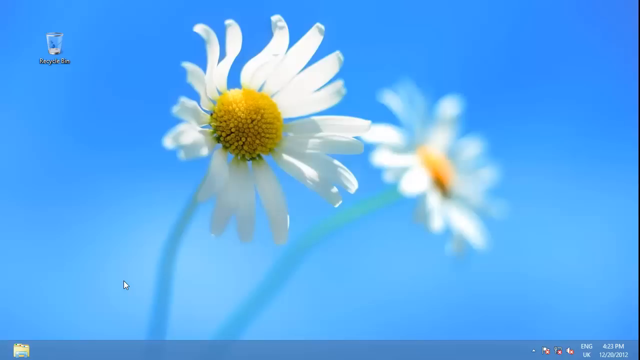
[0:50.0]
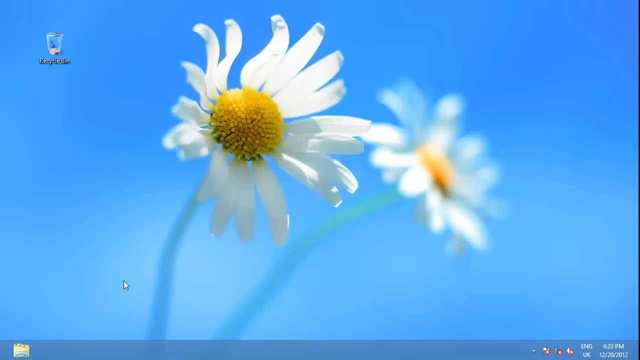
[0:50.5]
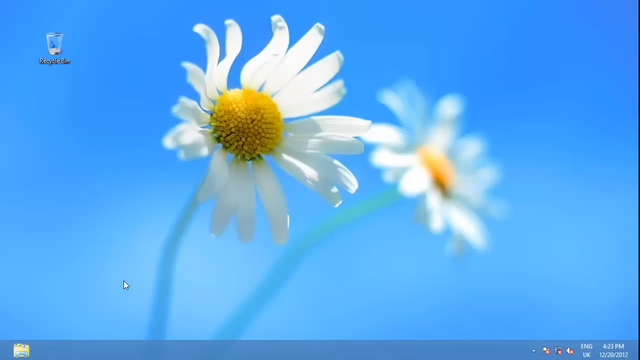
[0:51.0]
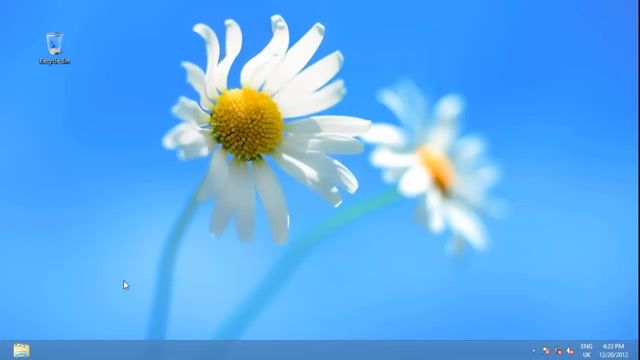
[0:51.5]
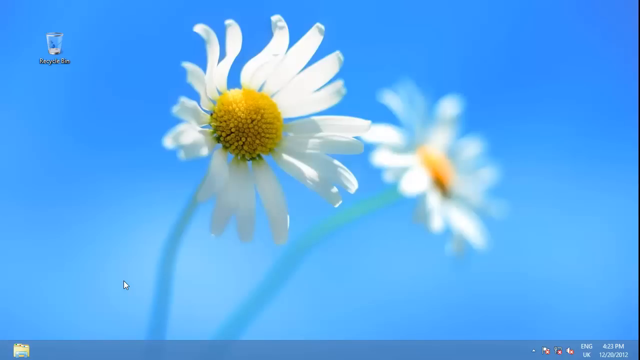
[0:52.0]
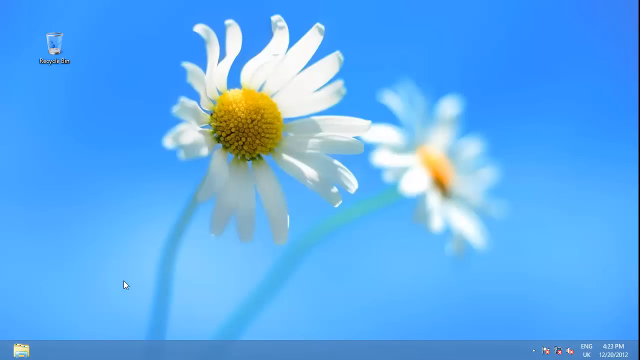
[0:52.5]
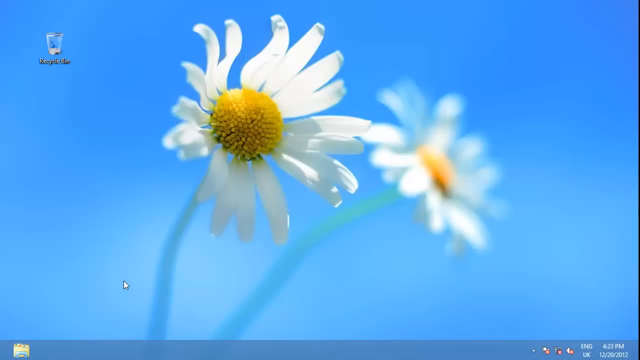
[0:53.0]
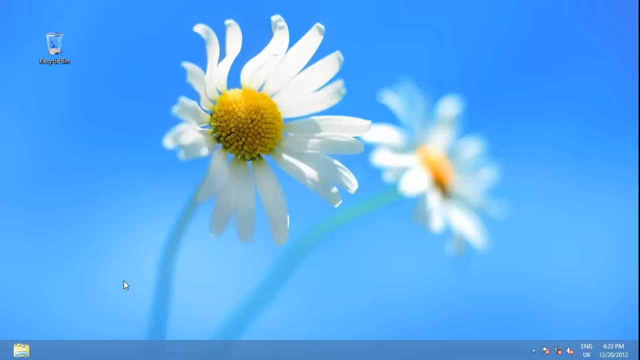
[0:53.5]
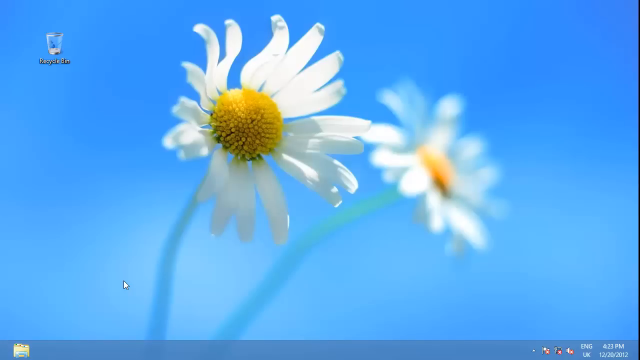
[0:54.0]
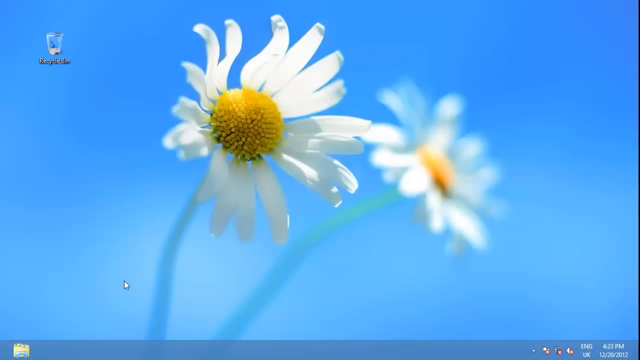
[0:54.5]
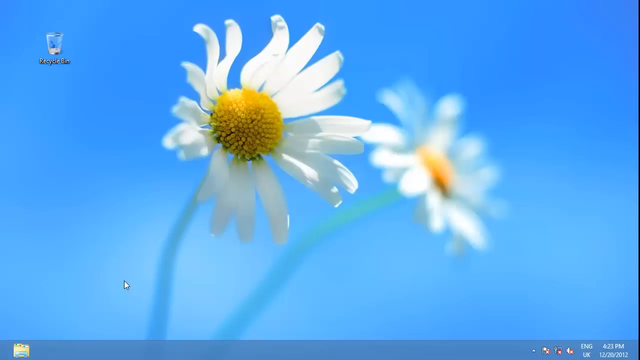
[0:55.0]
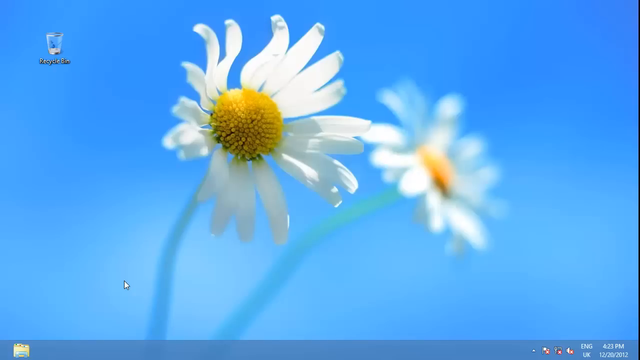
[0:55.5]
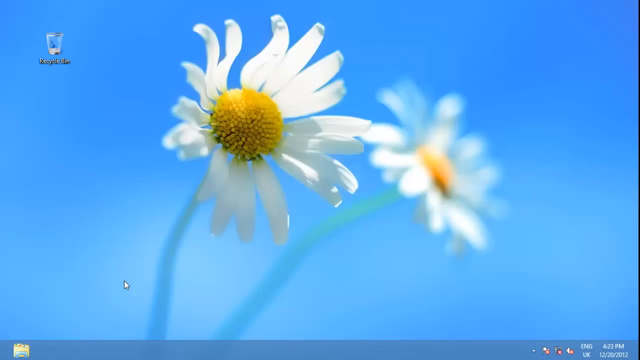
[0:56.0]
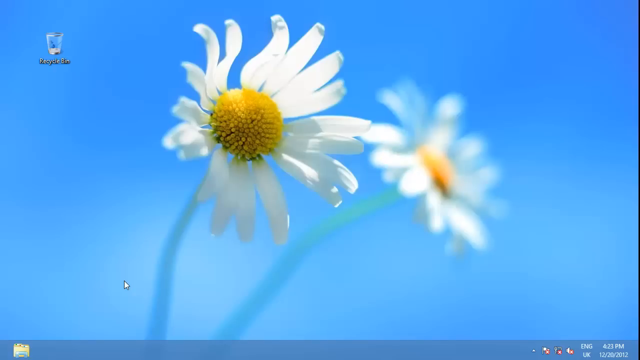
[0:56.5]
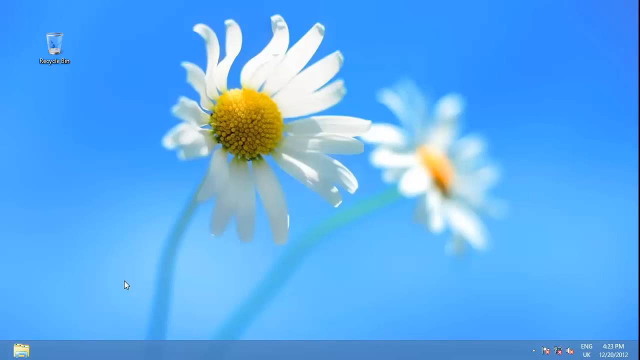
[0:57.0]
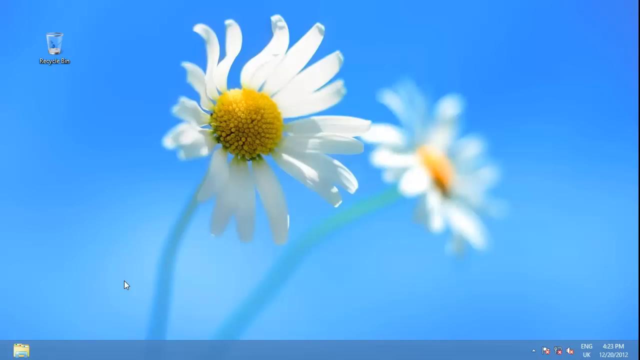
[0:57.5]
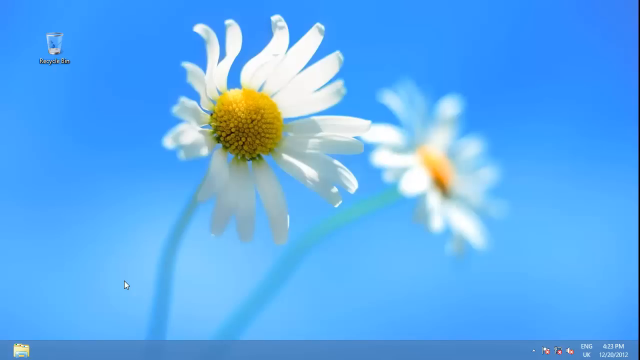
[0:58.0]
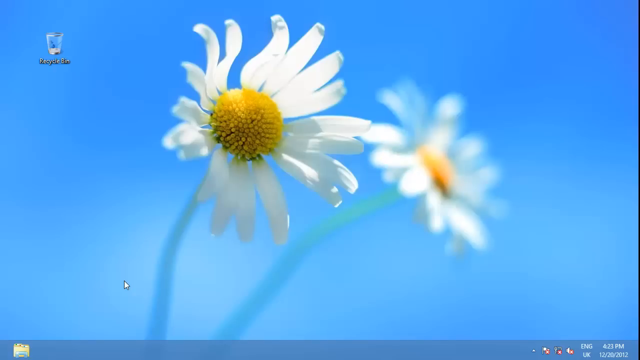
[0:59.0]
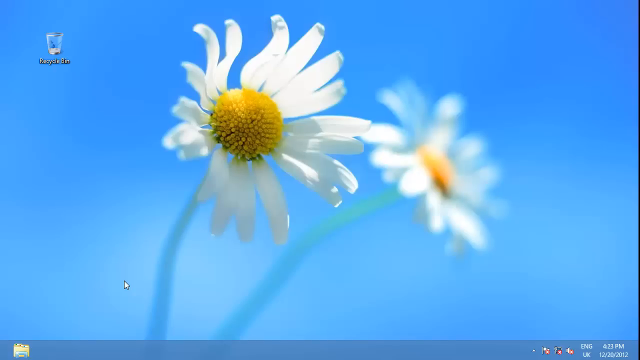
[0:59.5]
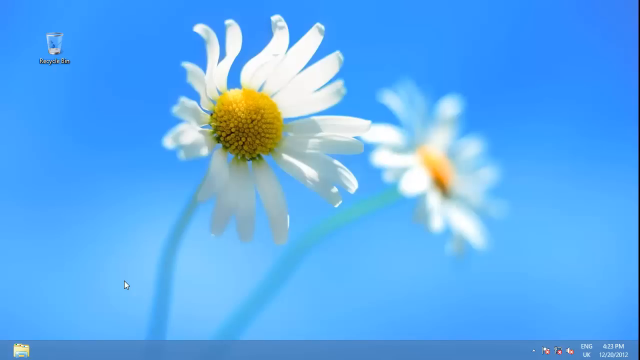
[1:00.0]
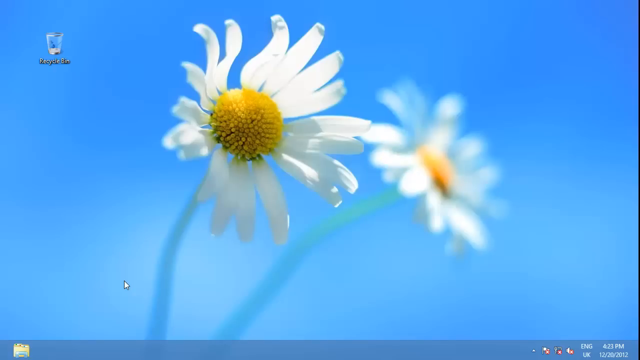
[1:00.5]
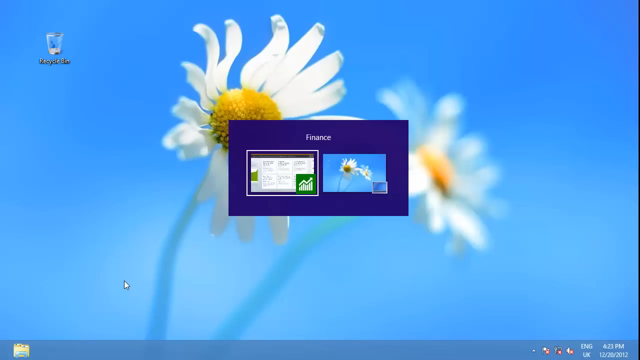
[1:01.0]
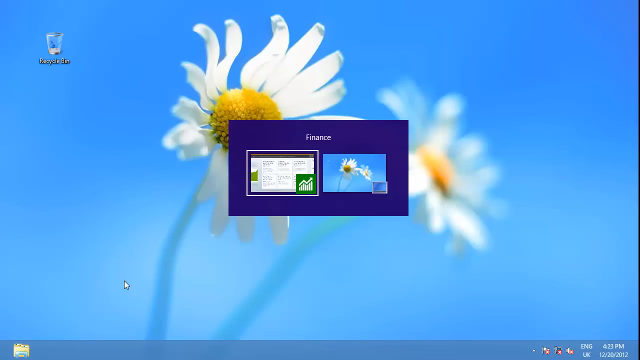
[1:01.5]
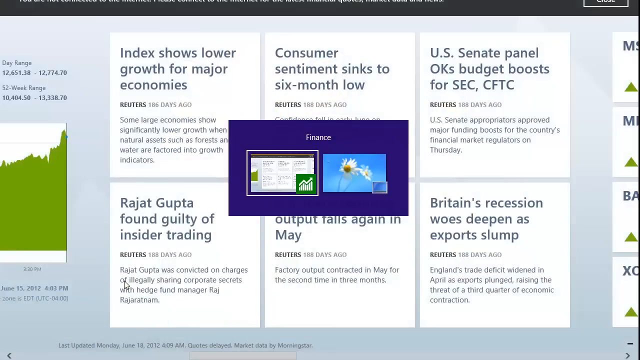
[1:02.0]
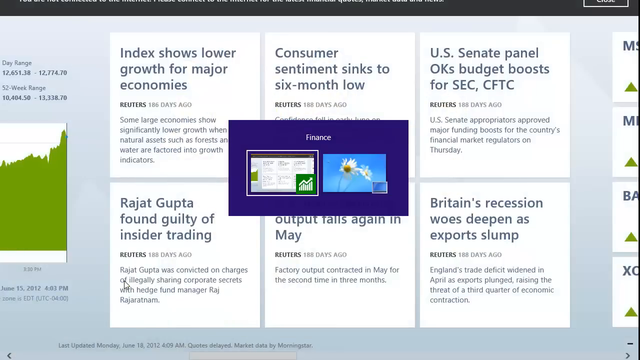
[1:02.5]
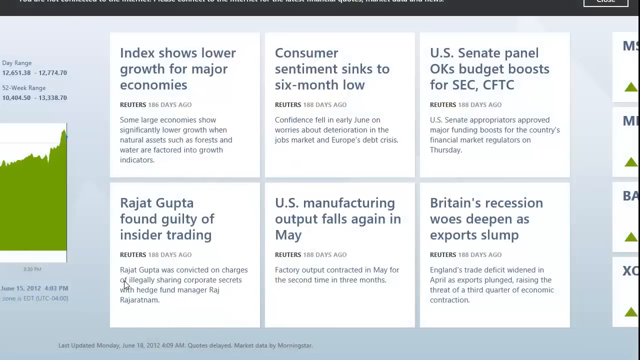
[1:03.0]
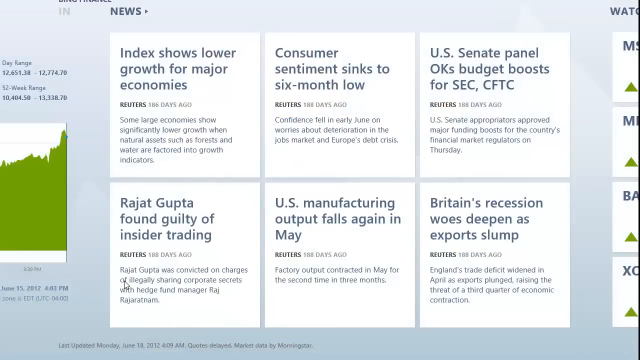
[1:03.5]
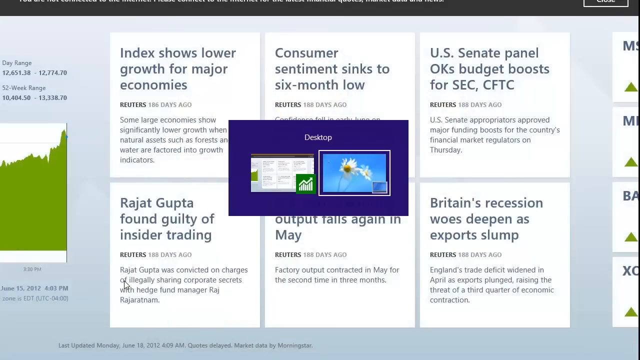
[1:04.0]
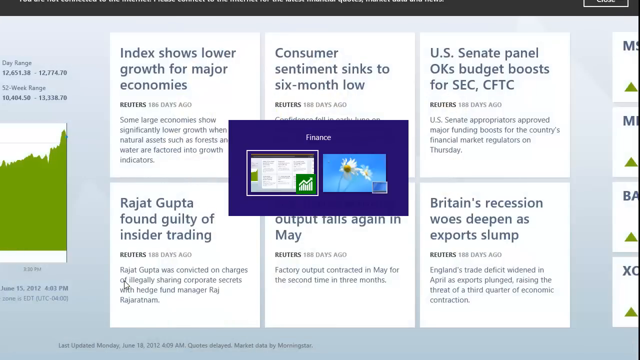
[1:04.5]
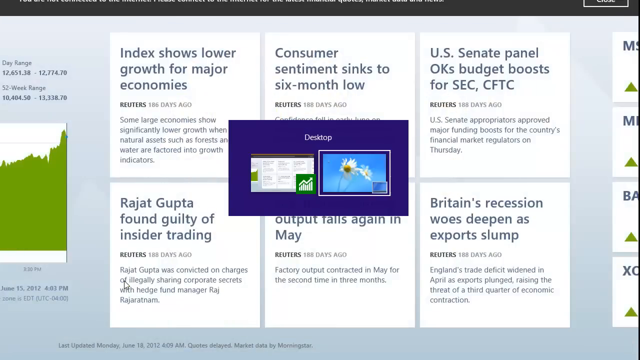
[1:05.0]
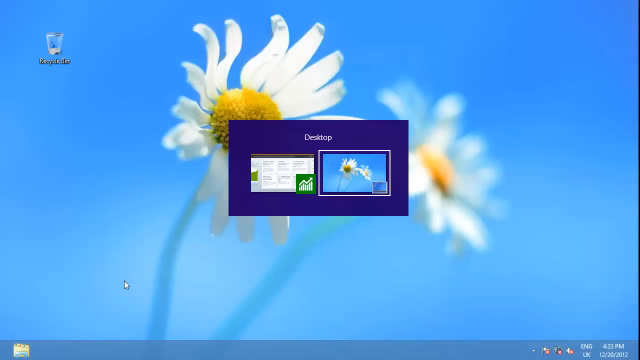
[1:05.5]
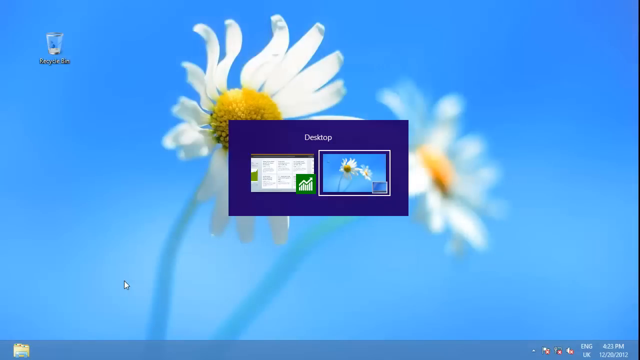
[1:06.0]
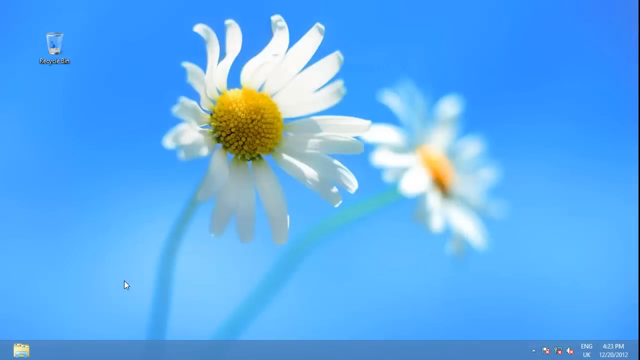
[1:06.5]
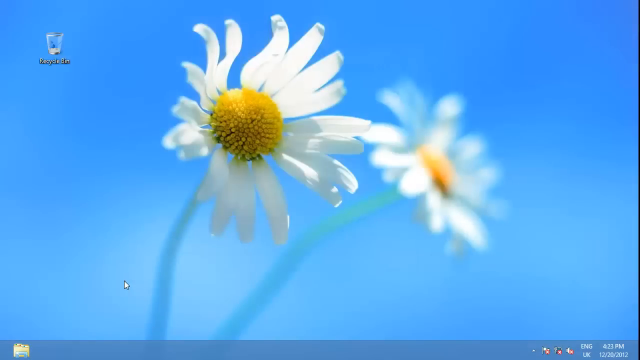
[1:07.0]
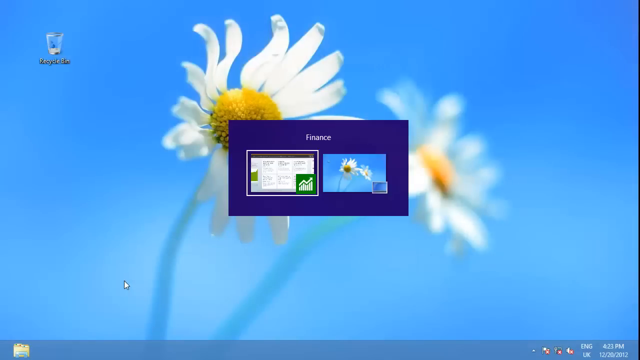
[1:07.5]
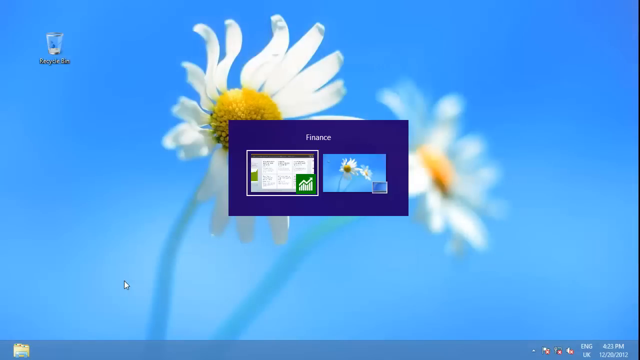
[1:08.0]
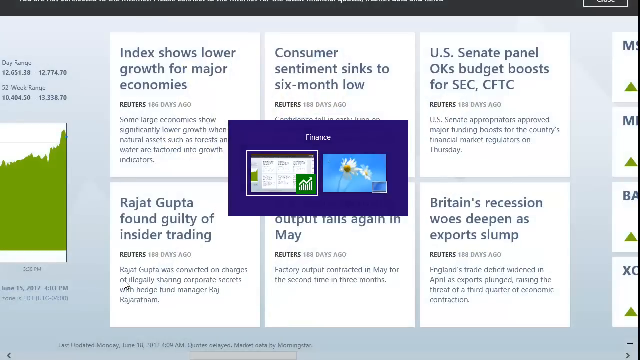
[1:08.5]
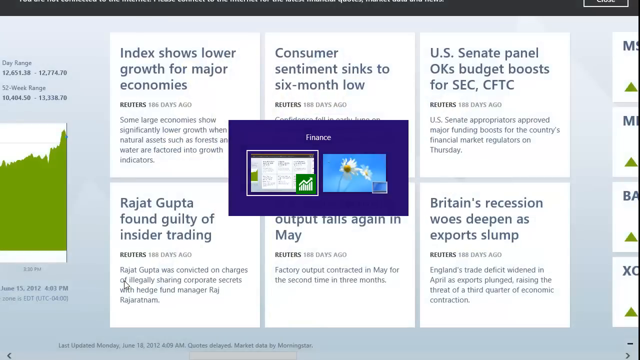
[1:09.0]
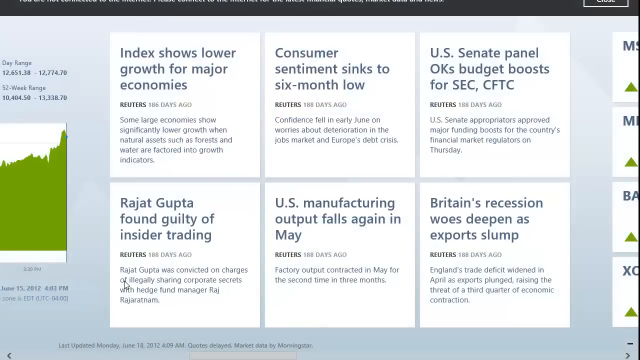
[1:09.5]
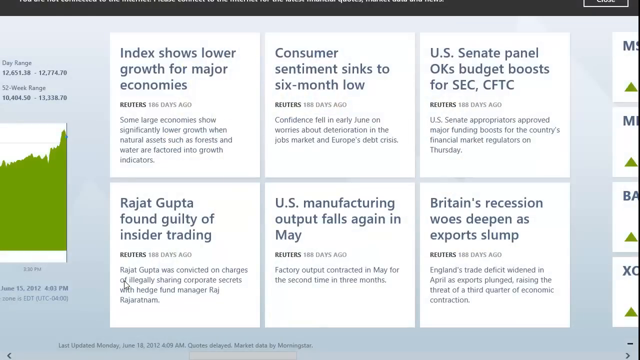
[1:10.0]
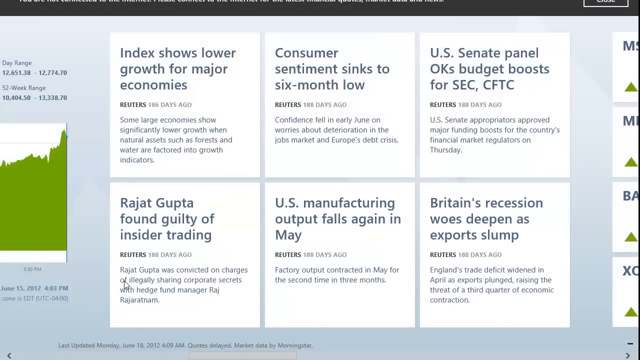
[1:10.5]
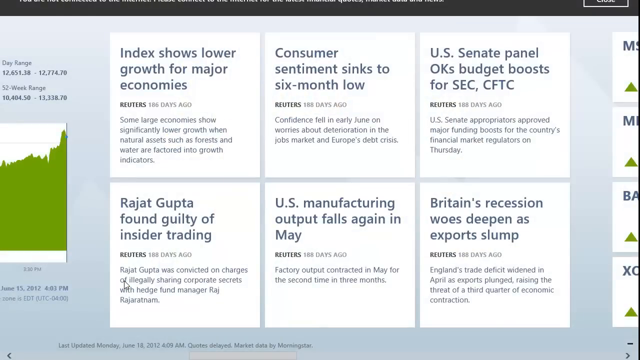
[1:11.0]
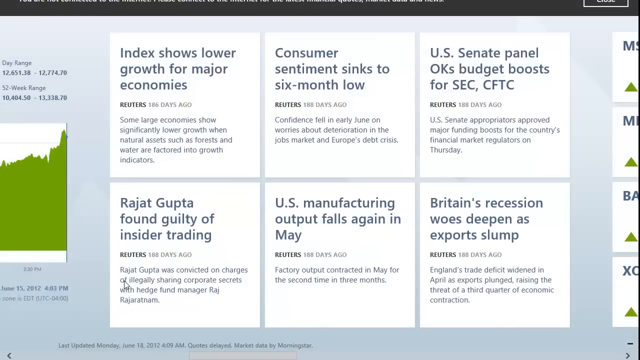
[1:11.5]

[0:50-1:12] The Windows desktop has only one icon, an empty recycling bin. The background is a clear blue sky, with two white flowers with yellow centers as the prominent feature in the foreground. The cursor sits toward the bottom left of the screen. At the bottom right, the time reads 4:23 p.m. and the date 12-20-2012, and indicators show there is no audio source and no internet connection. The screen stays still on the desktop for about 10 seconds until a dual-screen pops up in the center, titled "Finance" in white. The person hovers over the tab, which brings up the finance news articles, and switches between the finance news articles and the main desktop screen.